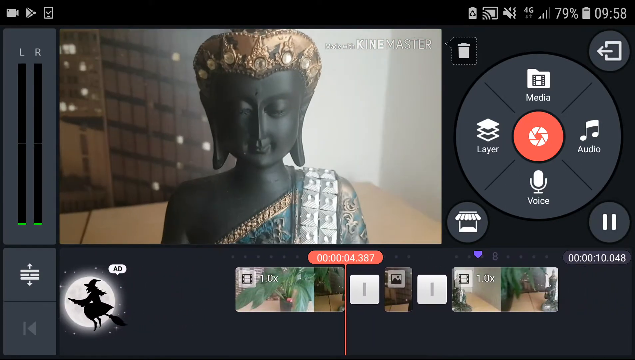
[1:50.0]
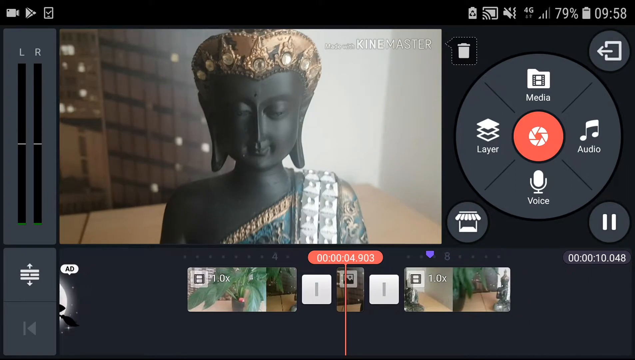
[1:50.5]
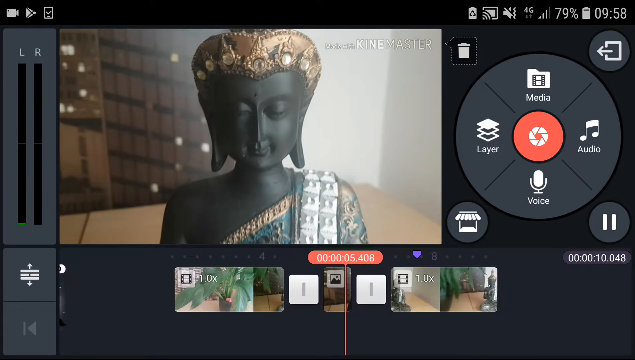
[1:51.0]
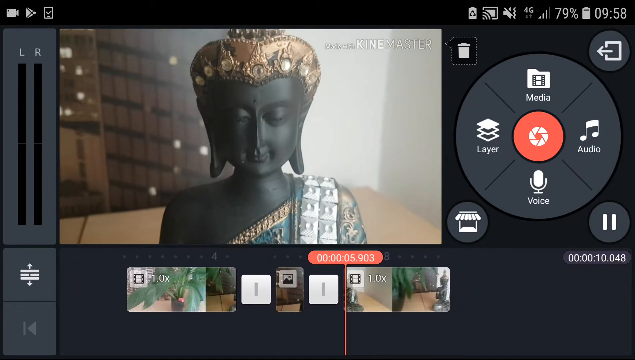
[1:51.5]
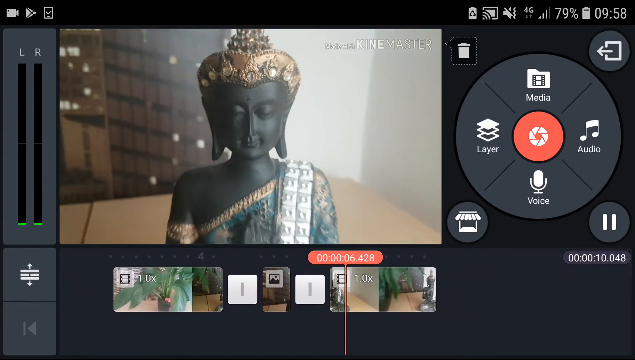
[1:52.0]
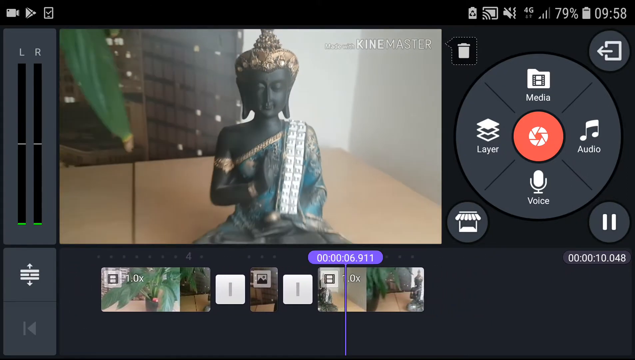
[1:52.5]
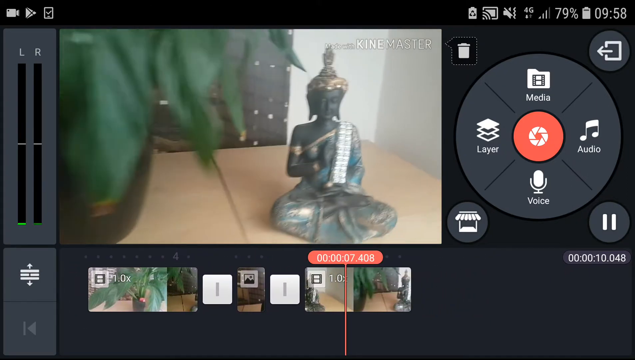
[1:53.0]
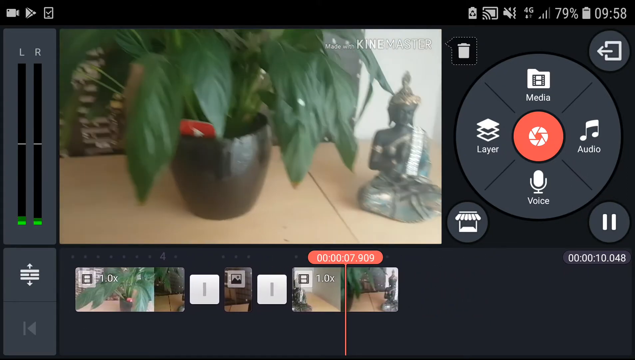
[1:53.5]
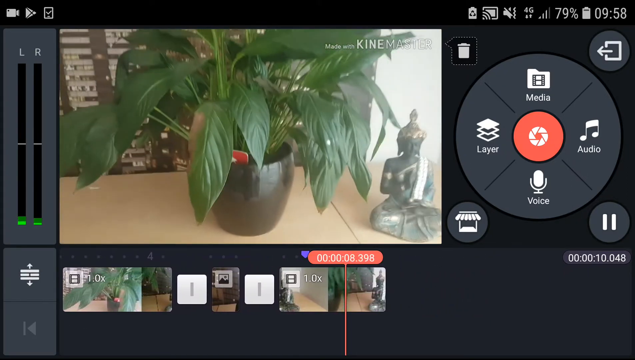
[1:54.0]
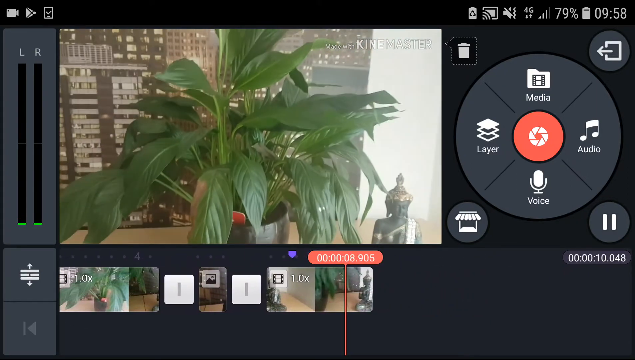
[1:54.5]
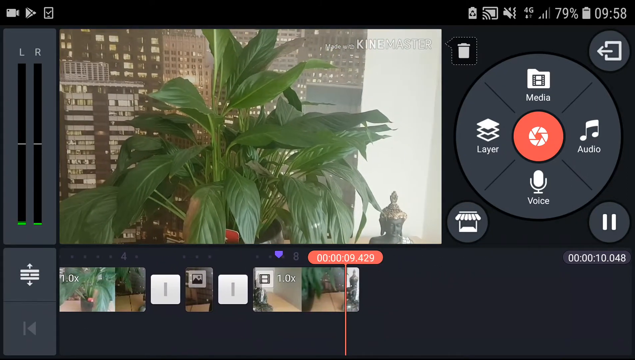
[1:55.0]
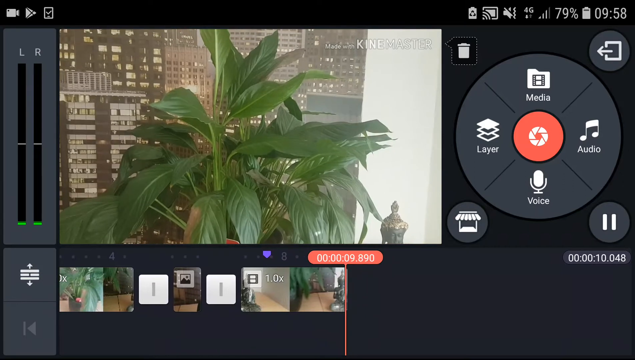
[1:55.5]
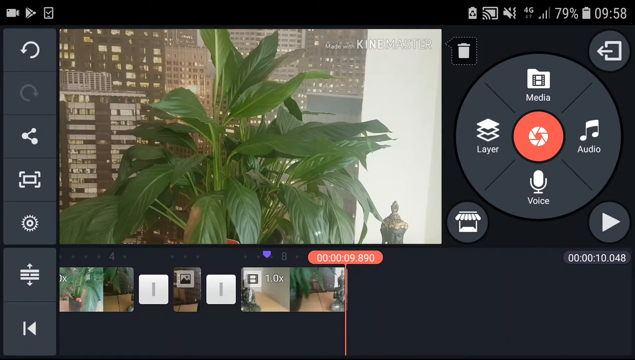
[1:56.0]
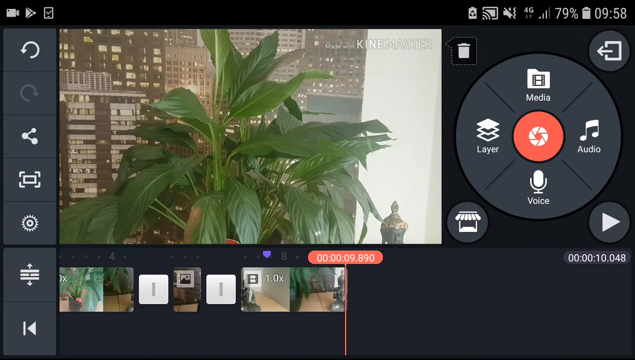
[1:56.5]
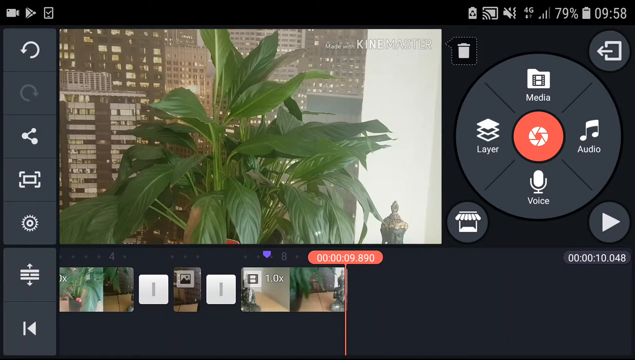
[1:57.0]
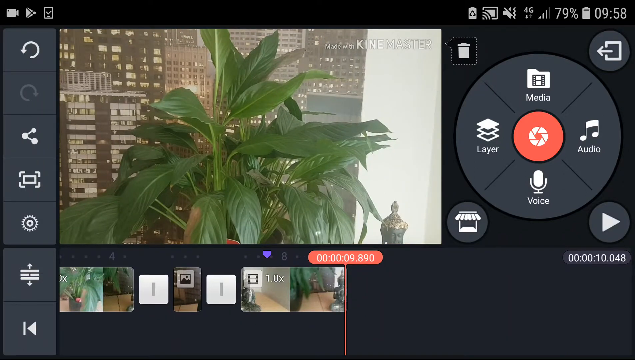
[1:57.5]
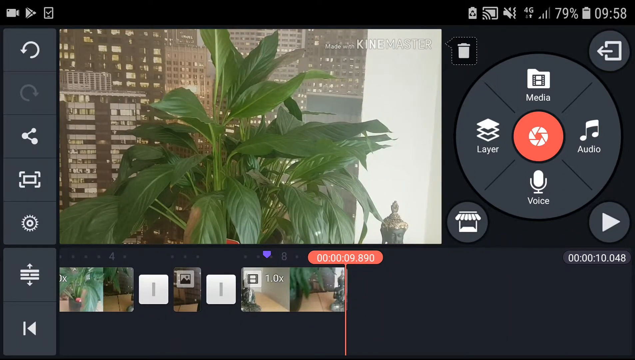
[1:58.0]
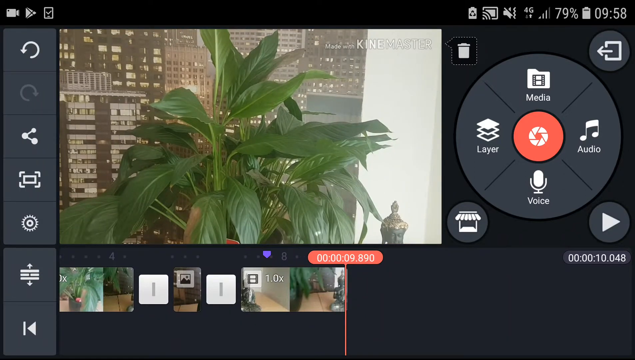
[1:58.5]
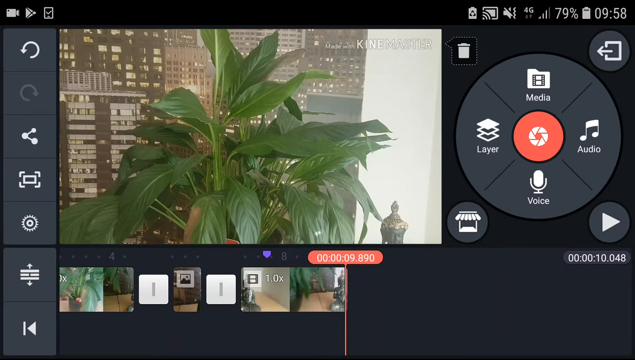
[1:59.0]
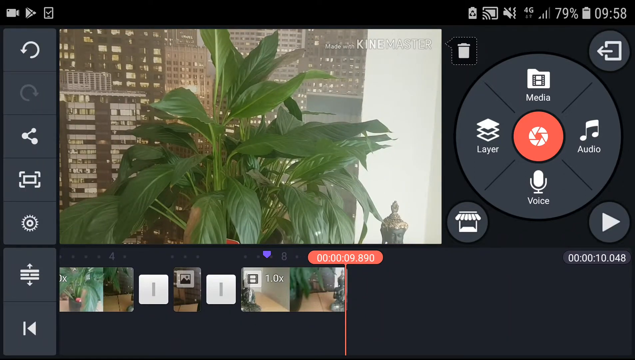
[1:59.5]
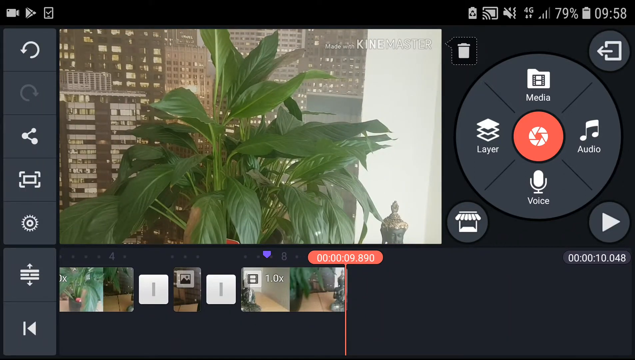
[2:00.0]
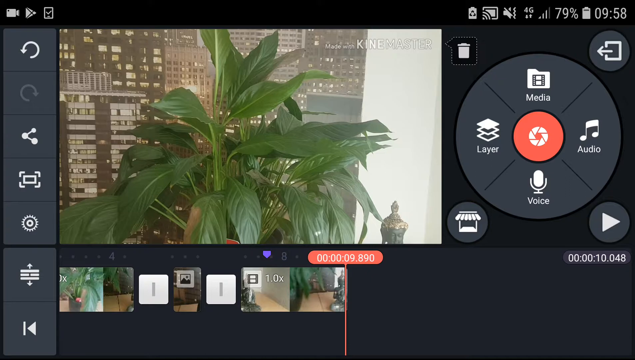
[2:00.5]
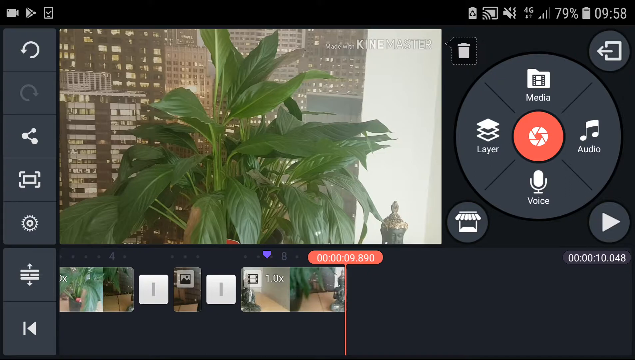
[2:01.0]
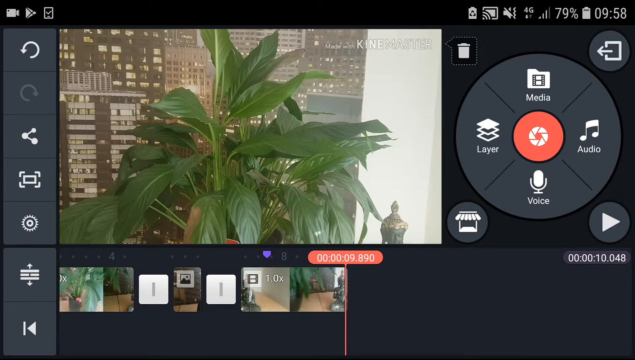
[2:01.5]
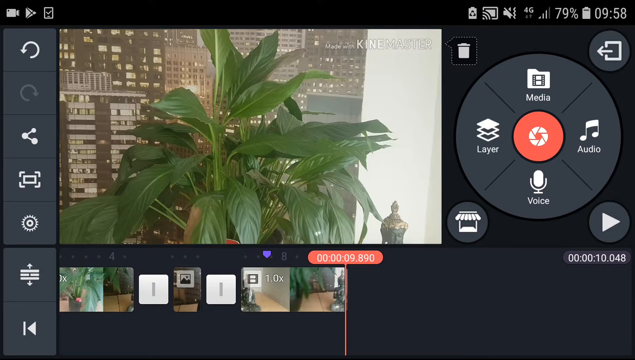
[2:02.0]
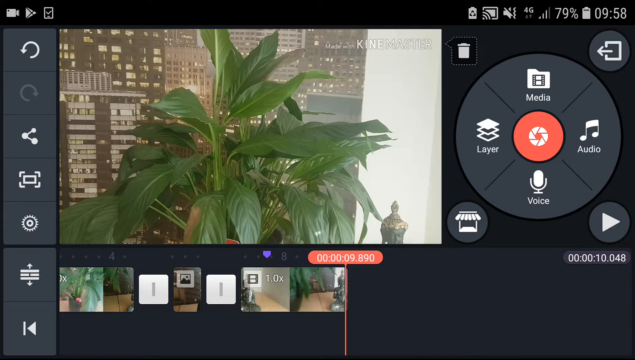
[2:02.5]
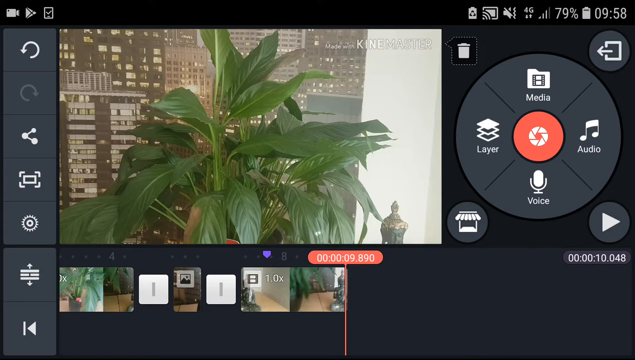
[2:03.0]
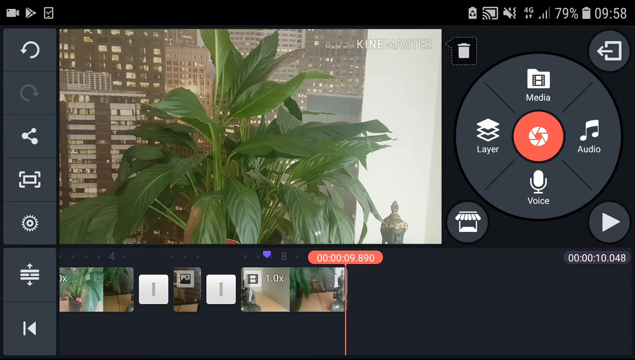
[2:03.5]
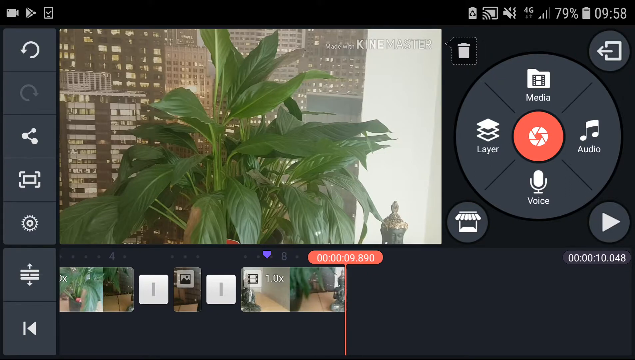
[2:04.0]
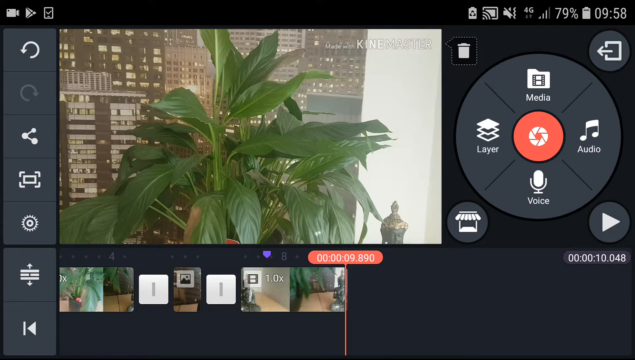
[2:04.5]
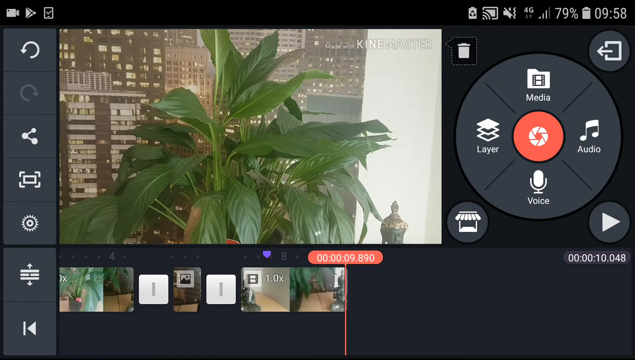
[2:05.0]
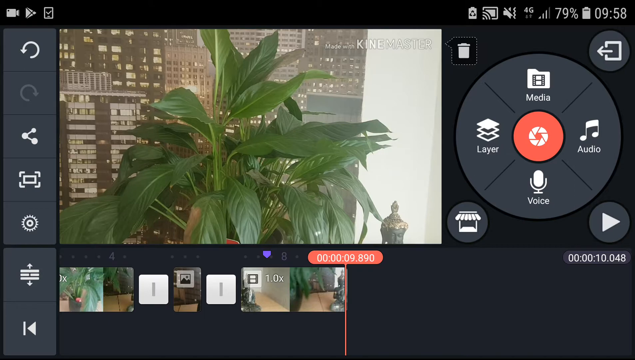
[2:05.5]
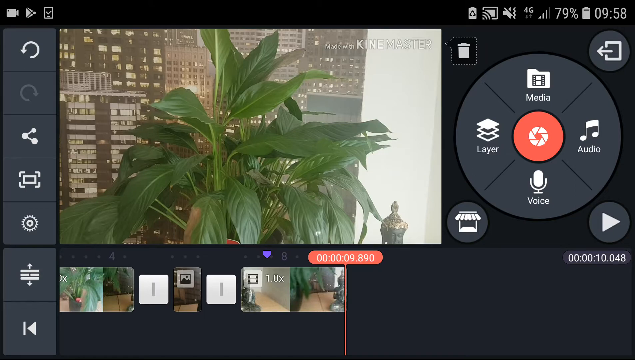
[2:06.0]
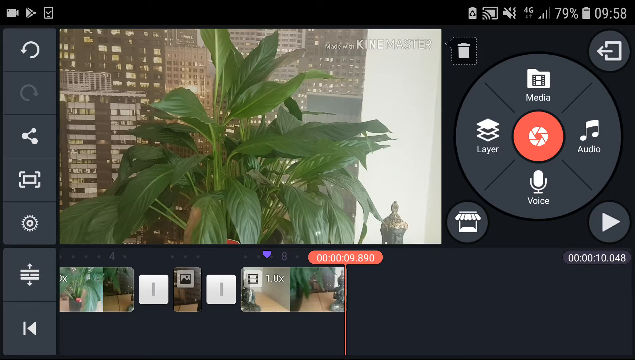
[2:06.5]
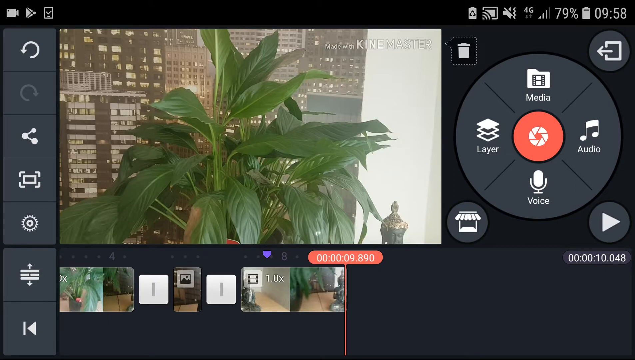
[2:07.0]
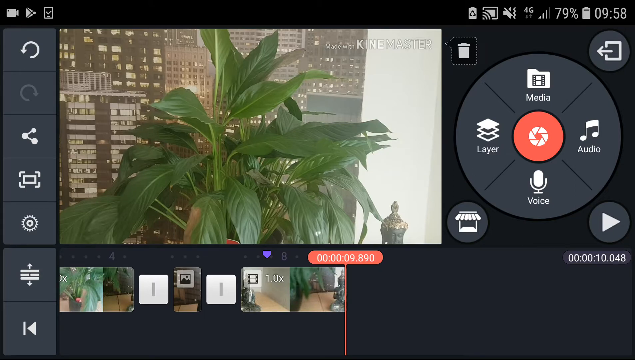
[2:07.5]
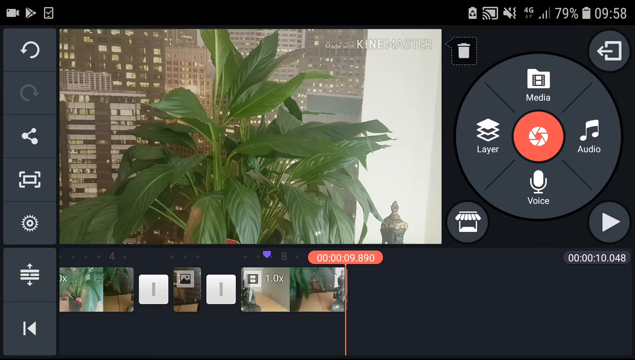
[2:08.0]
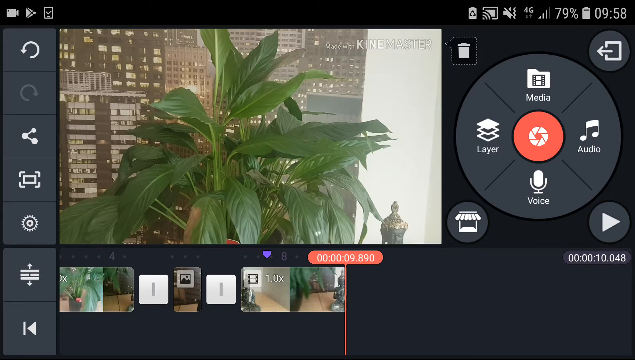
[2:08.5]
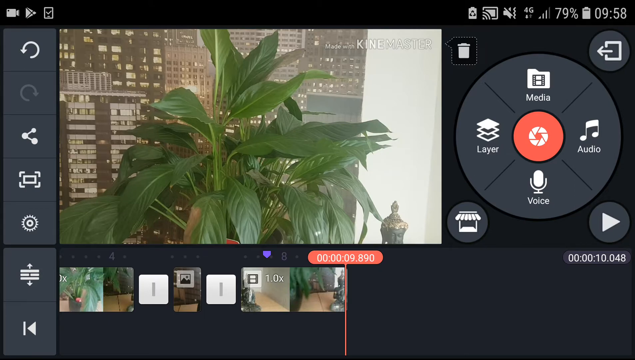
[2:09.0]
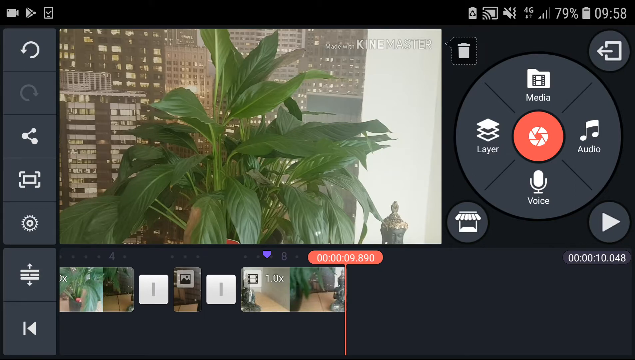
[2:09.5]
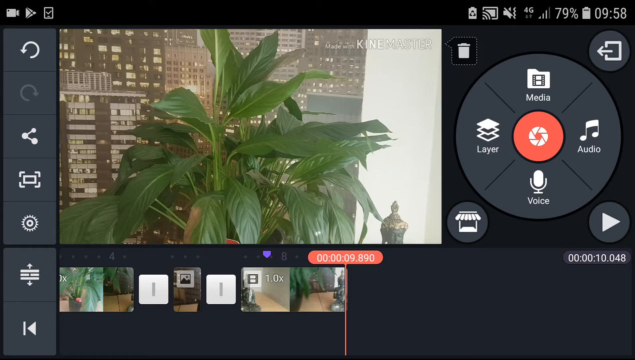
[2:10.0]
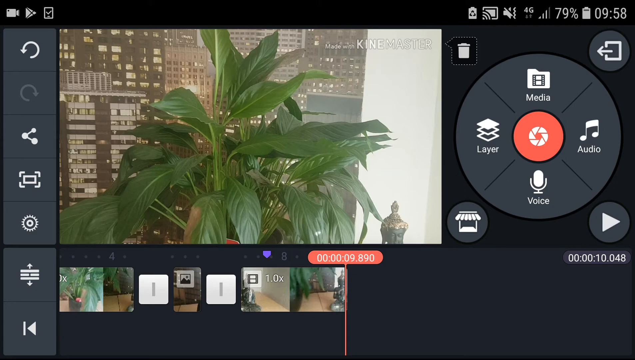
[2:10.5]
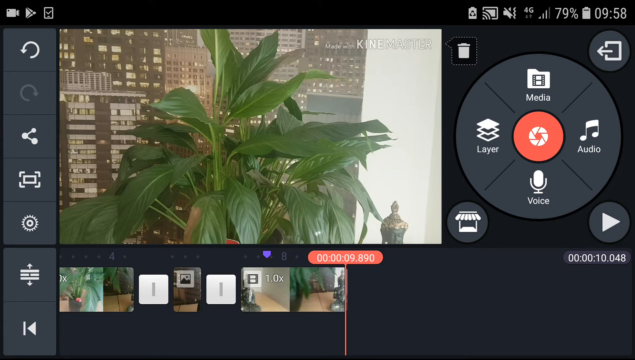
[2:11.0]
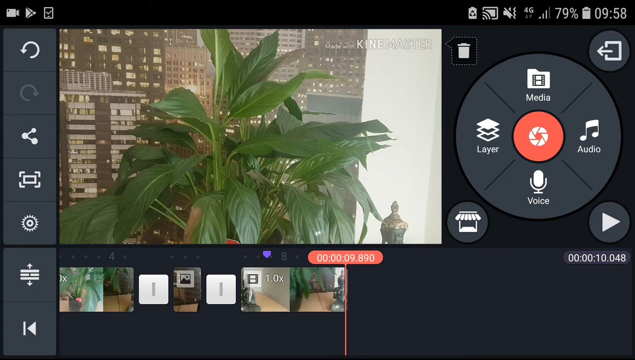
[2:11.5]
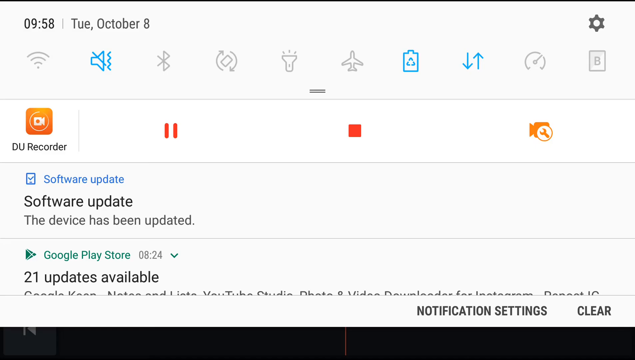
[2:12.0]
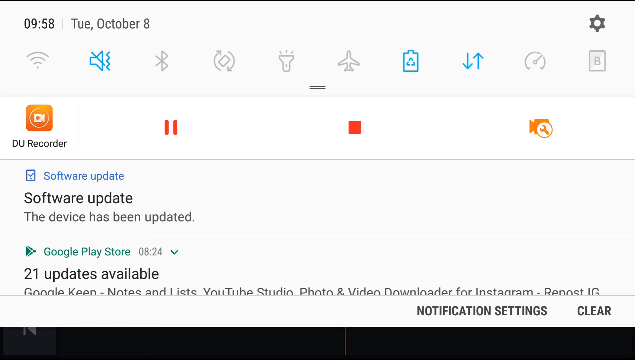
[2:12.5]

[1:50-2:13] On the left there is a left and right button, with a little video camera at the top, two other little symbols, and a setting button at the bottom. In the left corner is the little witch on the broom with the ad. On the right, the time still reads 9:58pm with 79% battery. The circle is back up, with "media" at the top, "layer" on the left, "voice" at the bottom and "audio" on the right. Four symbols surround it: a garbage can, what looks like a little store, what looks like a pause button, and what looks like a back button. The user moves through the frames again, ending on the leaves, and the screen returns to its very first view, with return and share options on the right. They stay there without doing anything, on the part of the video with a green plant. The view goes out to their computer screen and right back in, onto the black doll with the gold crown and the blue dress with silver. It stays there again, then moves back out onto the green plant, where it remains.